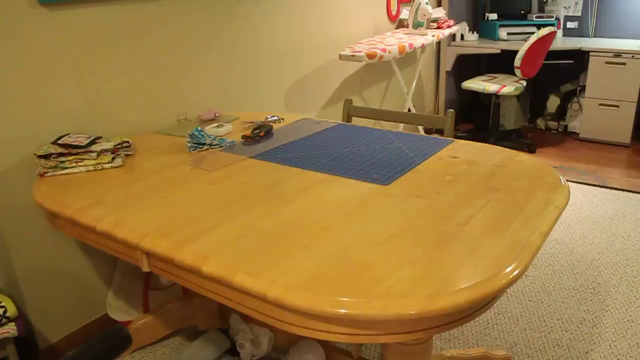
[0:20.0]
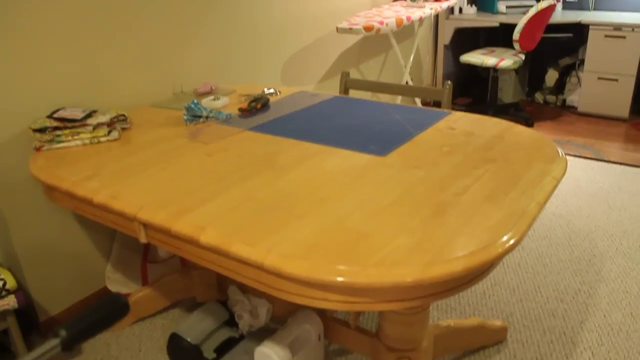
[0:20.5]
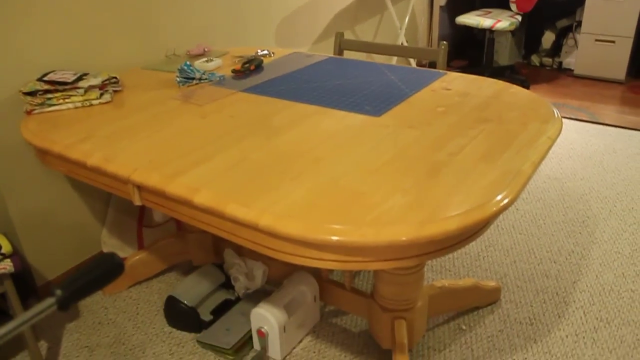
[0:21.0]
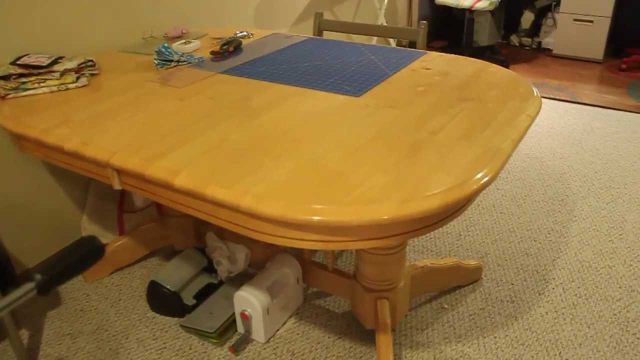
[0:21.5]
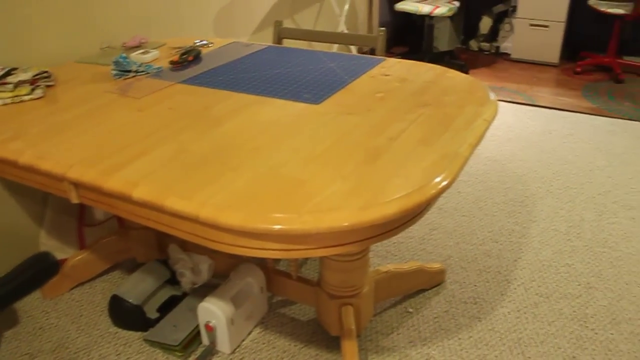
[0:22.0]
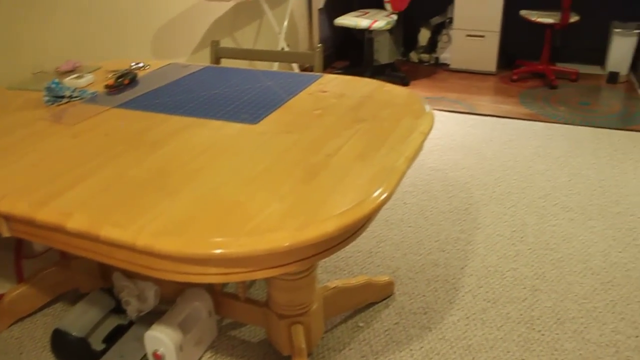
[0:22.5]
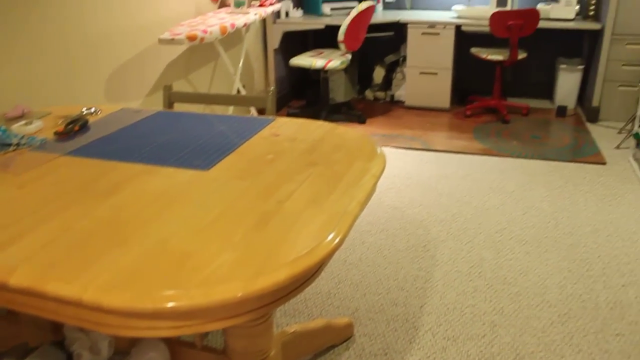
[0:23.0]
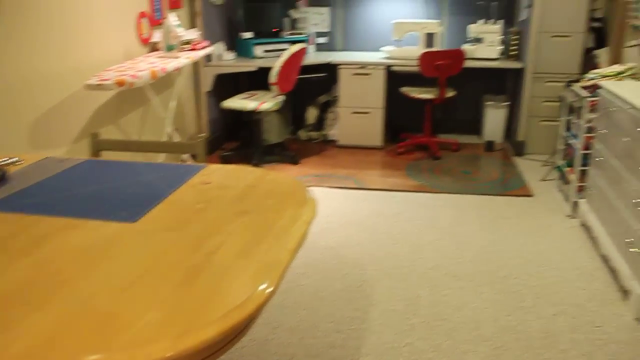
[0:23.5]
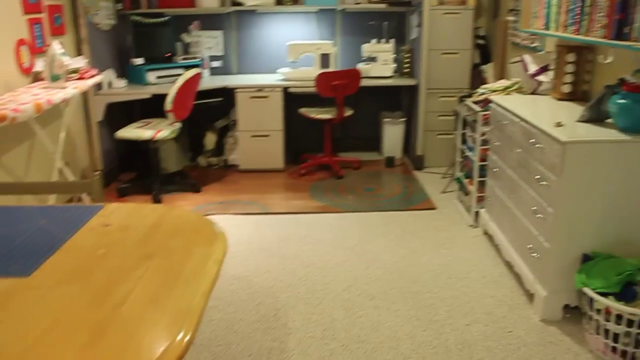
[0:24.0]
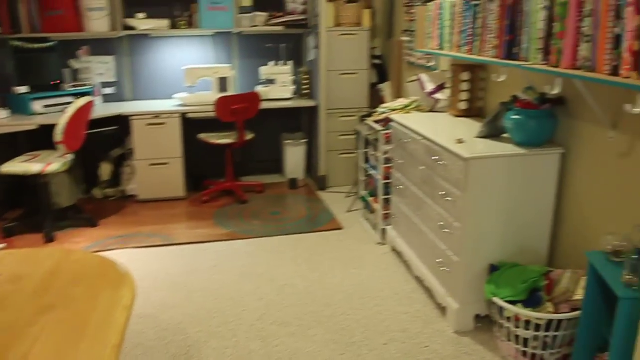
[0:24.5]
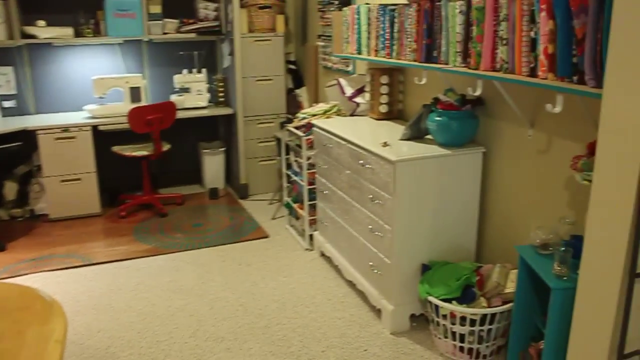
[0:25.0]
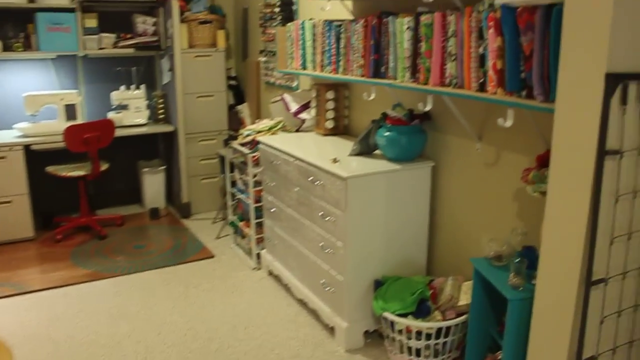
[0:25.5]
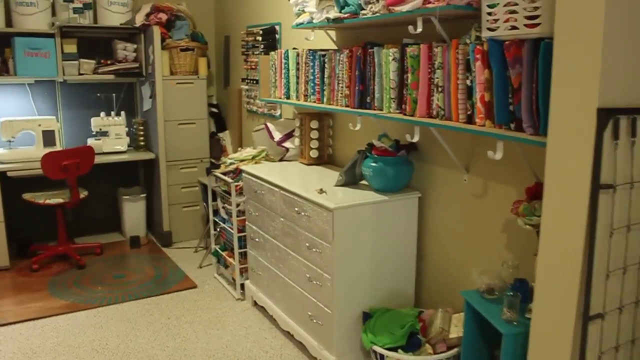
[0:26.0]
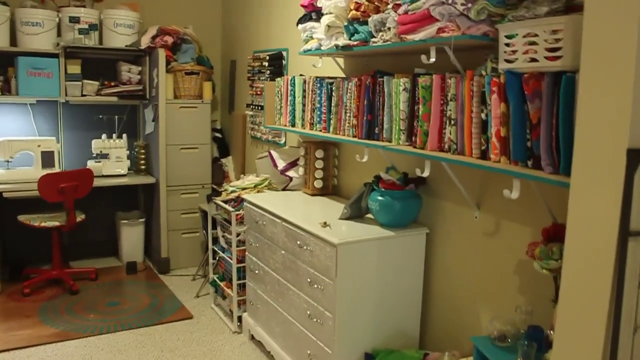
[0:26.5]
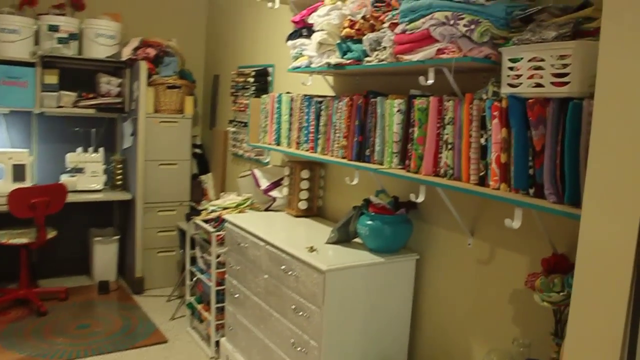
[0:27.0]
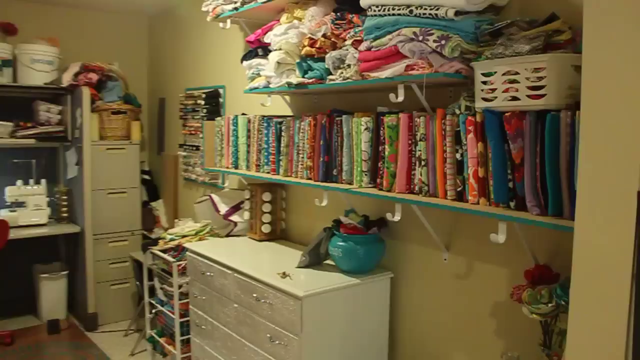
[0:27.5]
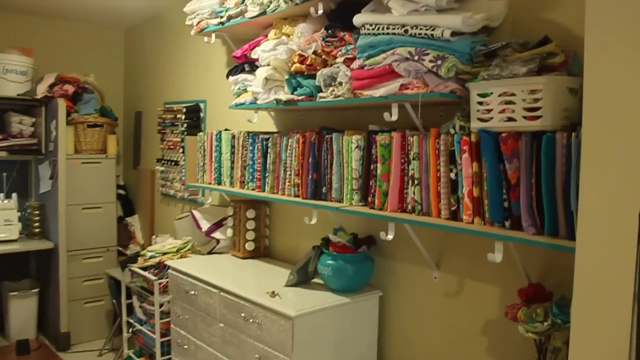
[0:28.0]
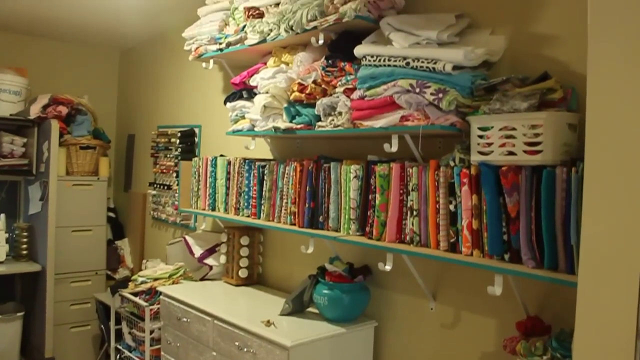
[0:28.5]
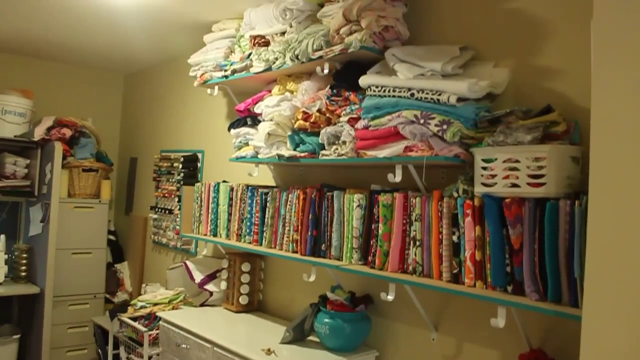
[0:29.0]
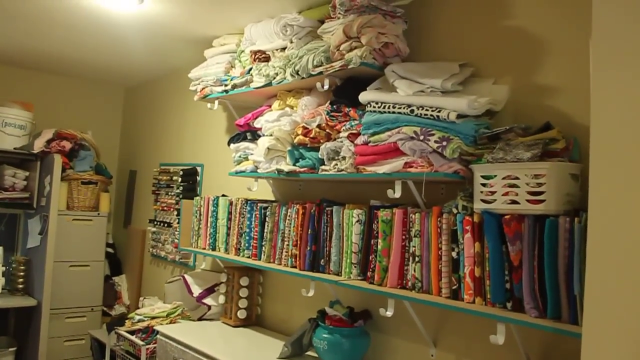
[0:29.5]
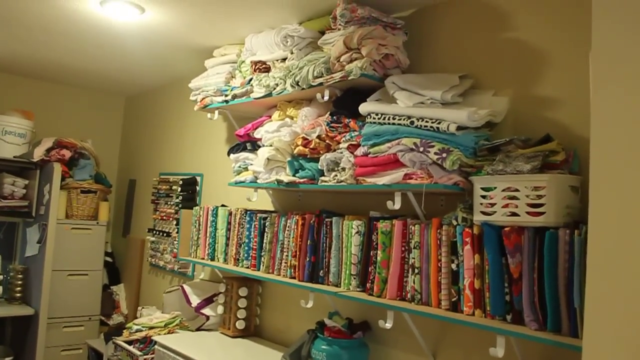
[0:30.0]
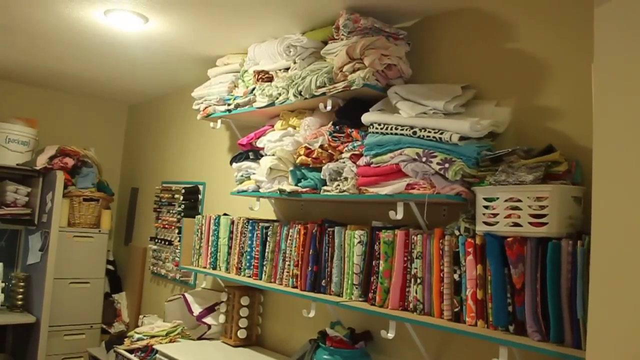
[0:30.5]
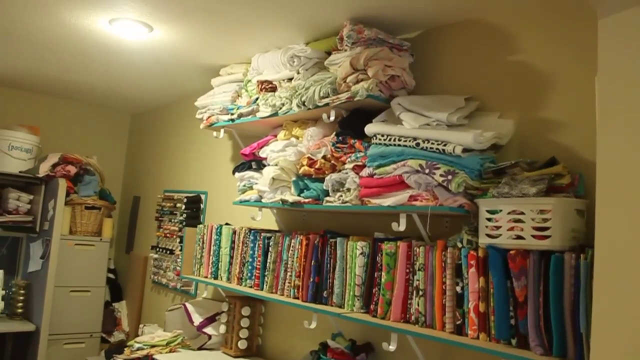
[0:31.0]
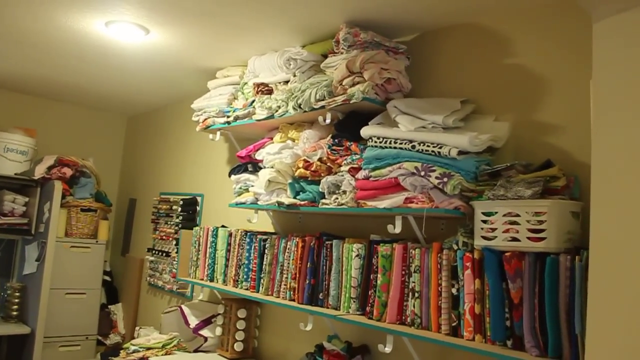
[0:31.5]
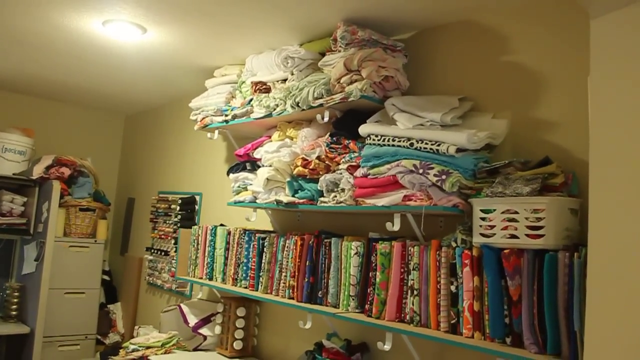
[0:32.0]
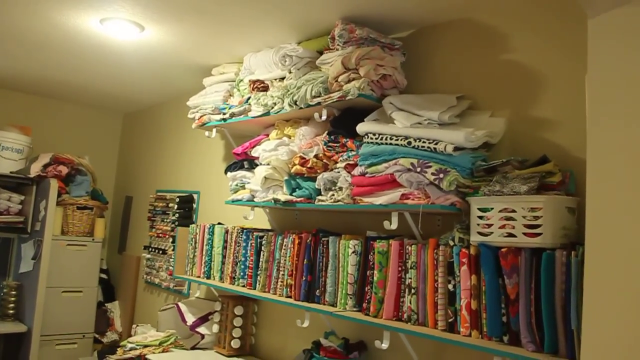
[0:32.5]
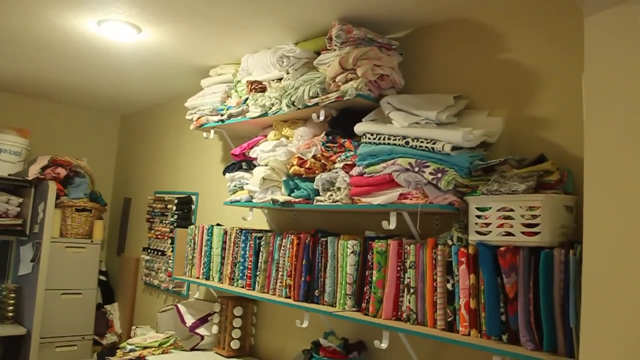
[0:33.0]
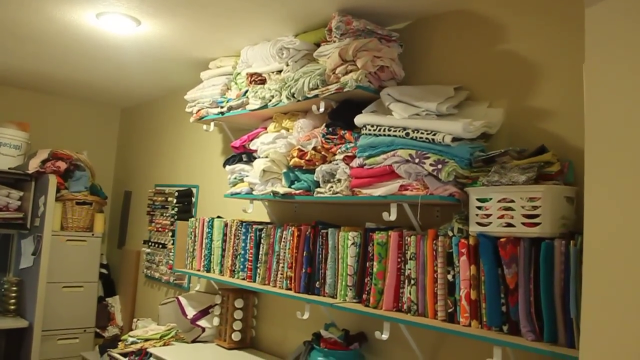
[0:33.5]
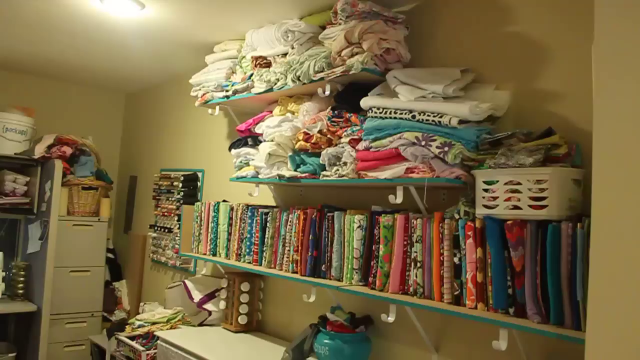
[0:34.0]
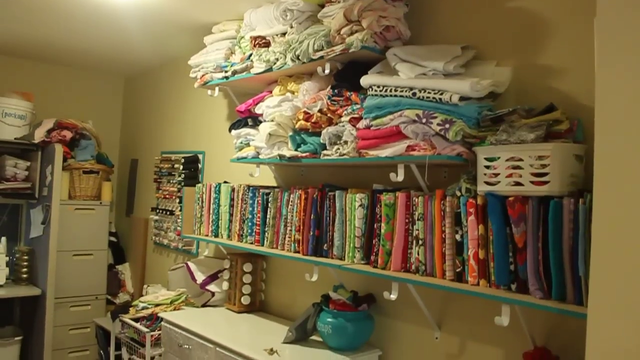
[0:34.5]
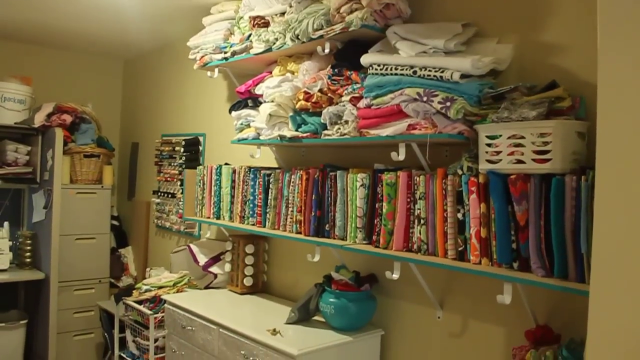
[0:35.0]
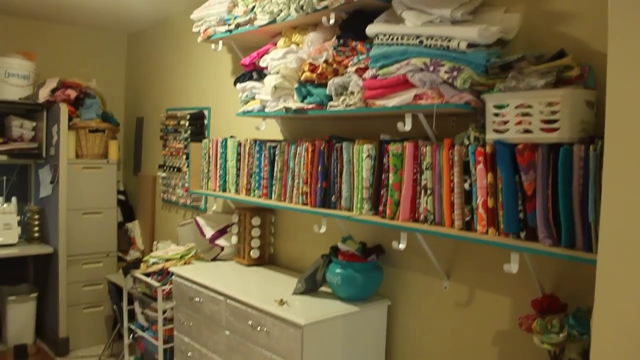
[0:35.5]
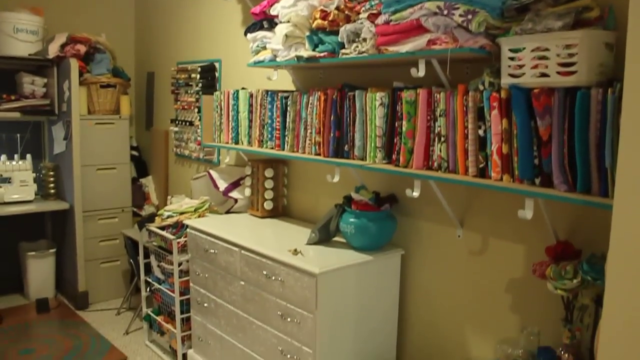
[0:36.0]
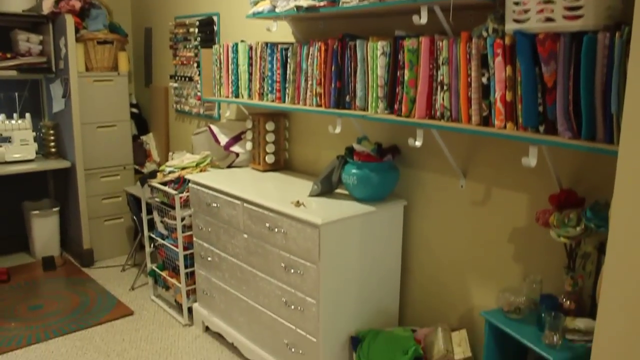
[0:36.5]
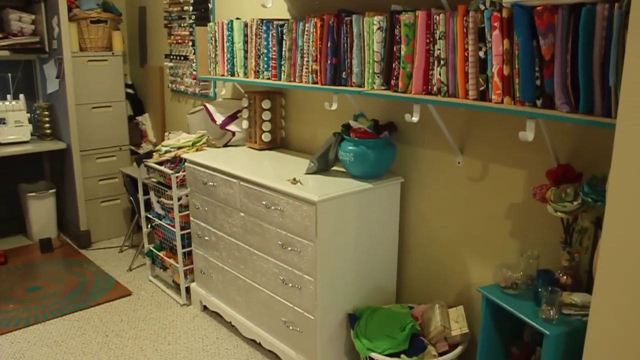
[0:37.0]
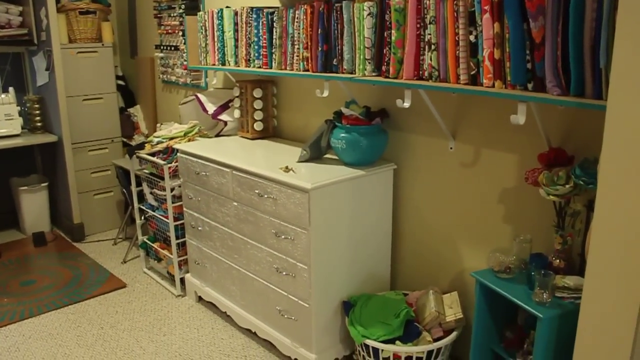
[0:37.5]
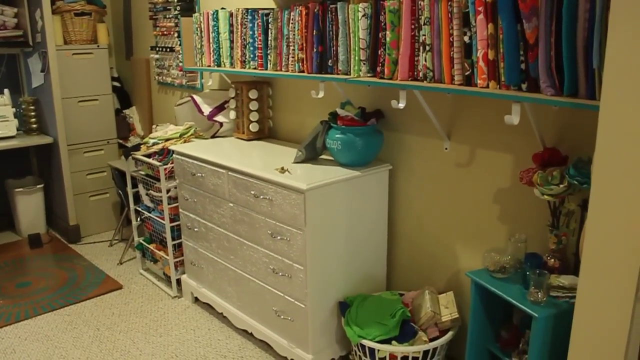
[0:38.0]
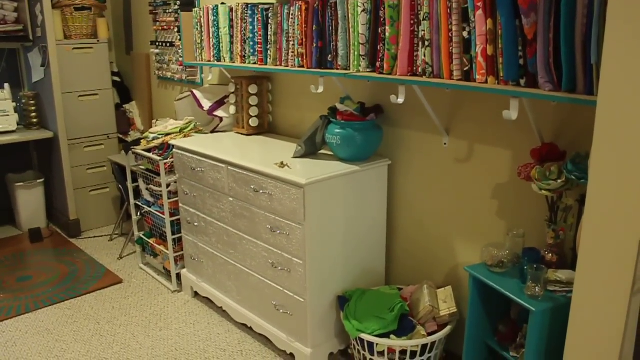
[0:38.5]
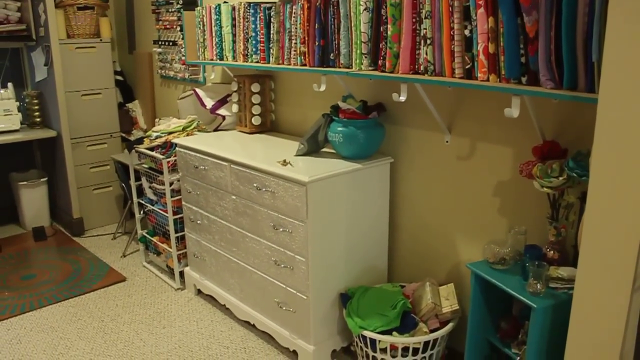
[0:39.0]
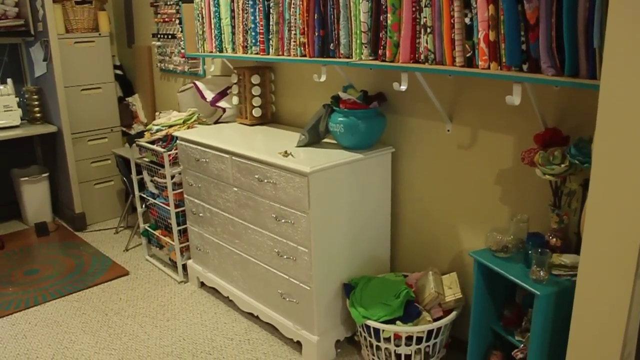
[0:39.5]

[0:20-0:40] The camera focuses on a wooden table at the front of the room. In the back of the room is a white desk. The wall on the left is a yellowish color, and next to it is an ironing board with an iron on top. The ironing board has a white surface with a polka dot pattern of large circles colored orange and various shades of pink. On the table there is a small blue cover and a few craft-related items lying on it. There is only one chair next to the table, and it is also wooden. The floor is carpeted in a grayish color. The camera then pans to the right side of the room, which has two shelves that appear to be full of various fabrics. Under the shelf is a white dresser.